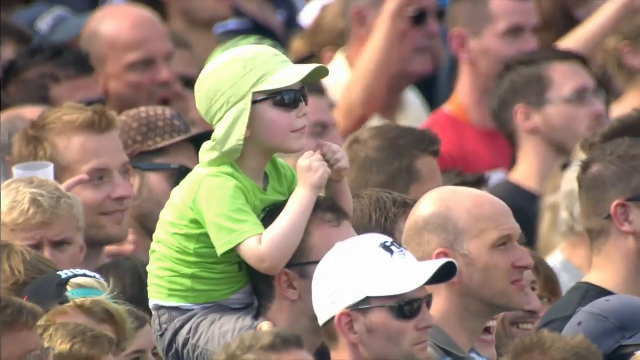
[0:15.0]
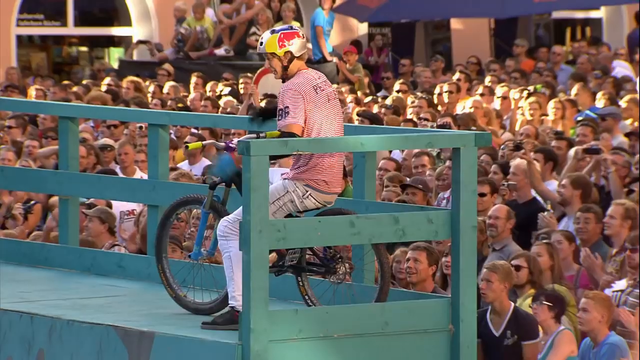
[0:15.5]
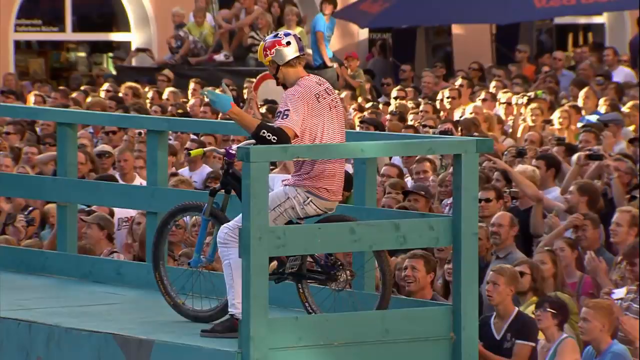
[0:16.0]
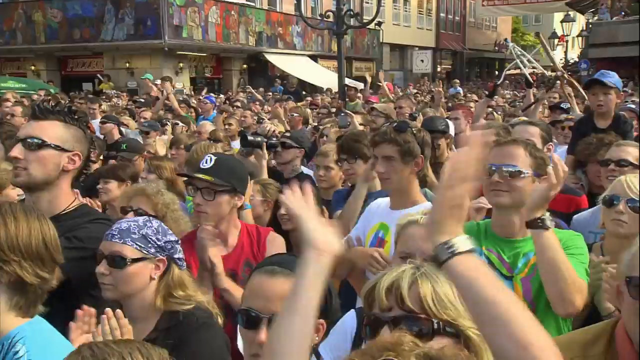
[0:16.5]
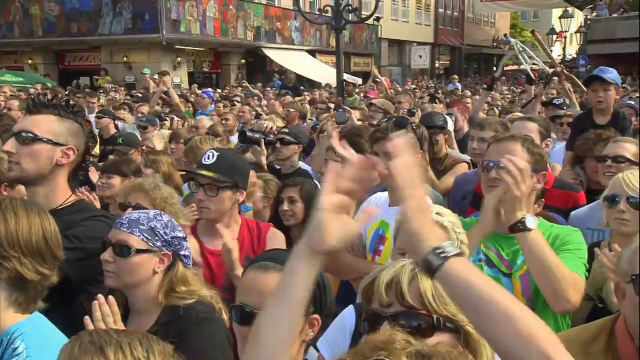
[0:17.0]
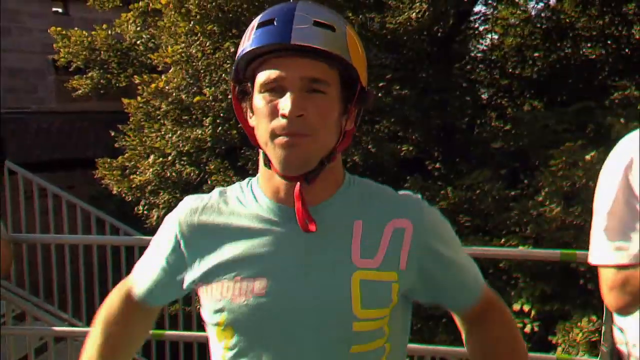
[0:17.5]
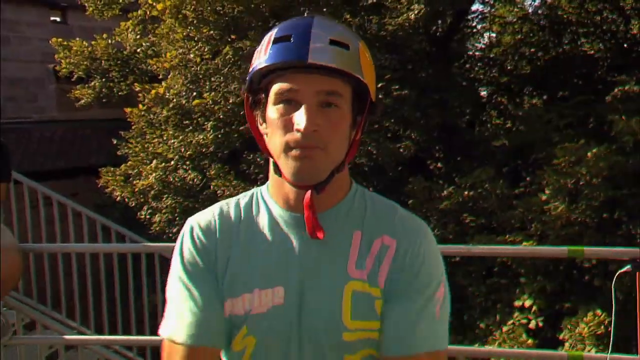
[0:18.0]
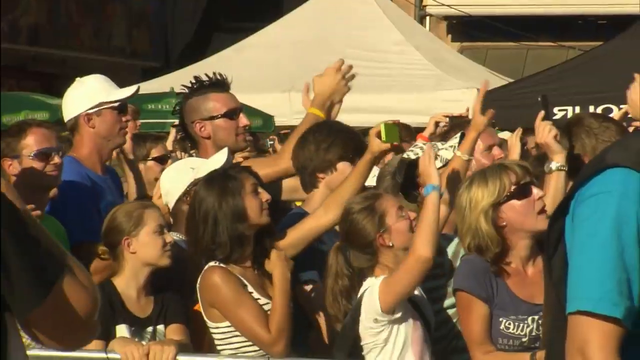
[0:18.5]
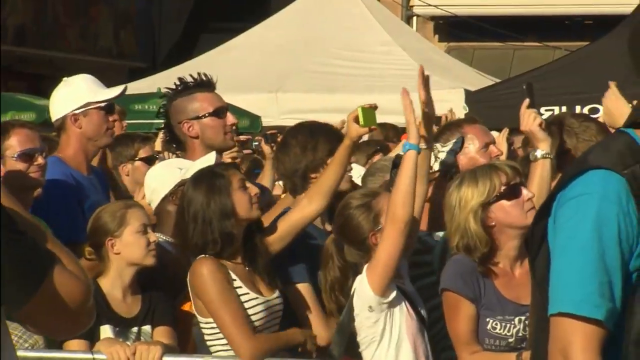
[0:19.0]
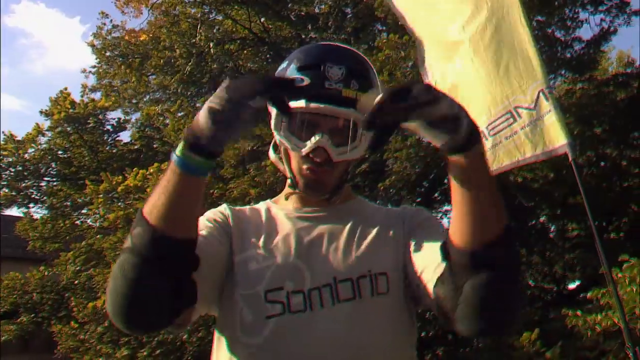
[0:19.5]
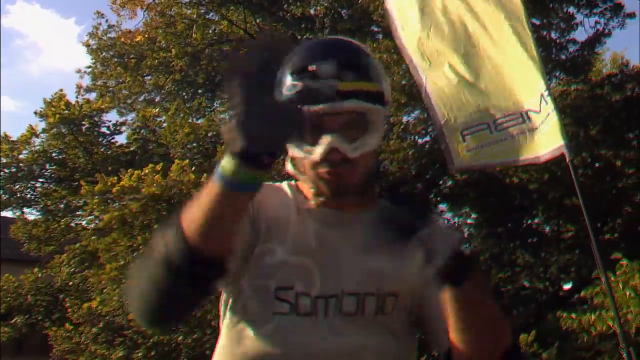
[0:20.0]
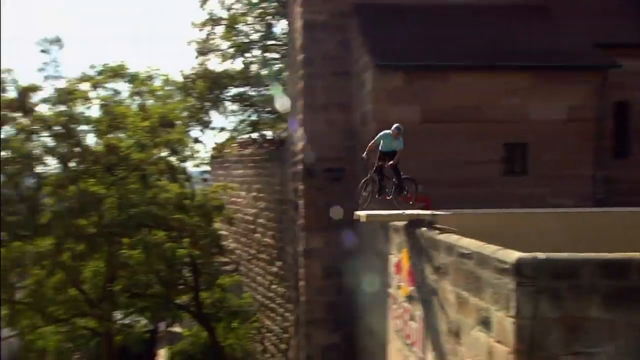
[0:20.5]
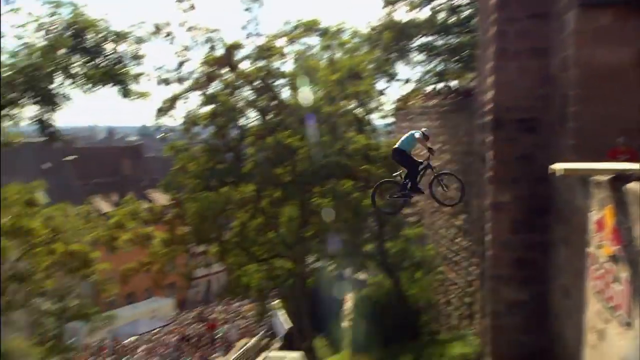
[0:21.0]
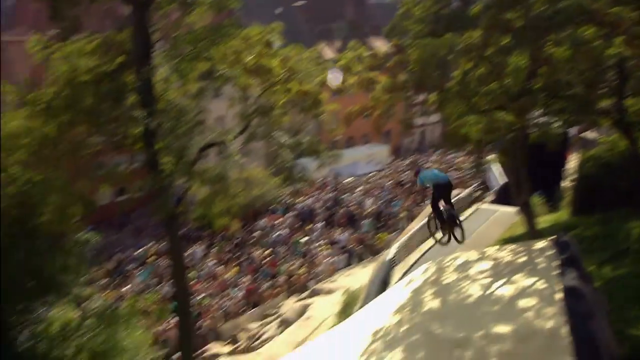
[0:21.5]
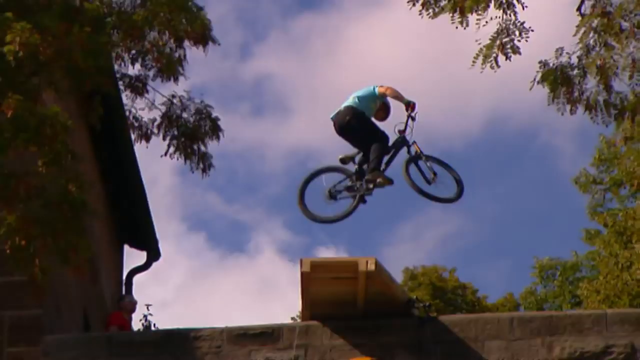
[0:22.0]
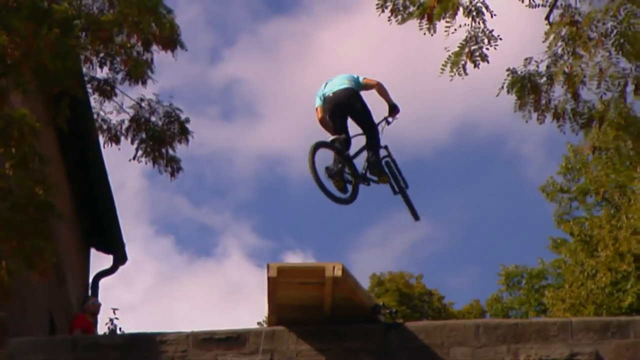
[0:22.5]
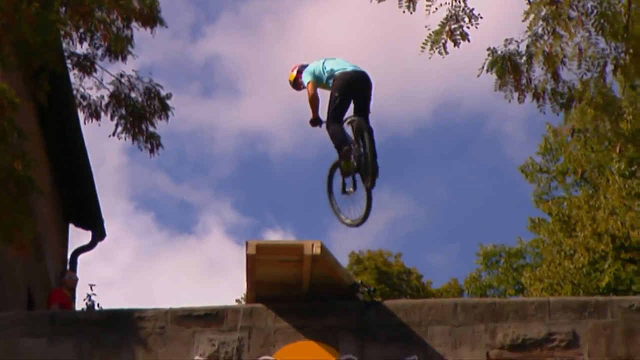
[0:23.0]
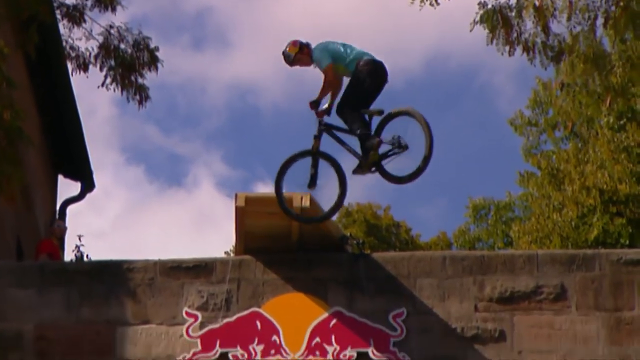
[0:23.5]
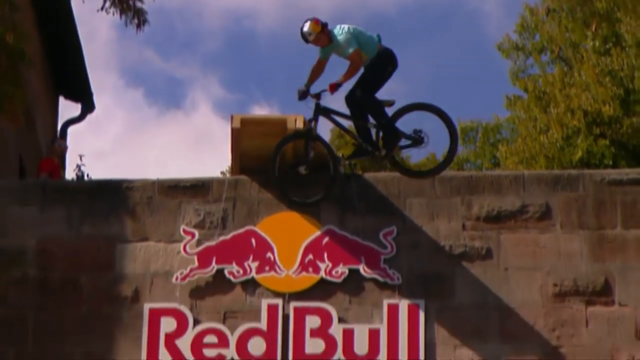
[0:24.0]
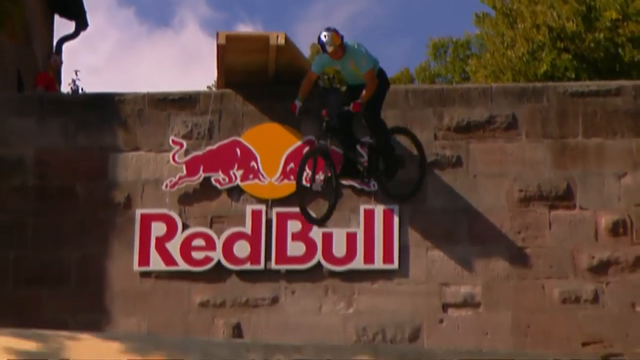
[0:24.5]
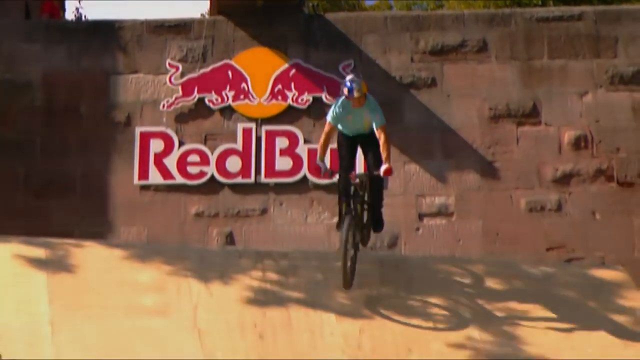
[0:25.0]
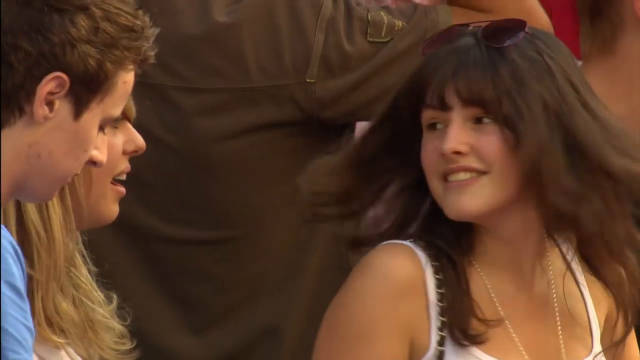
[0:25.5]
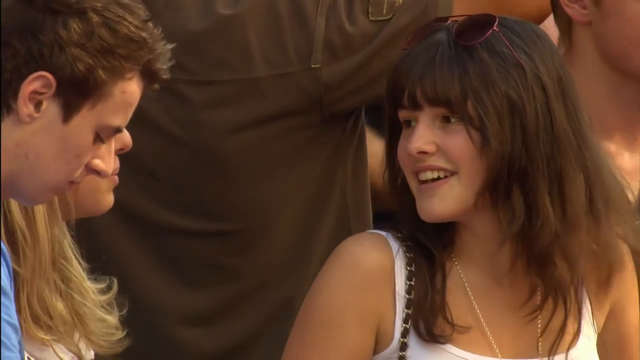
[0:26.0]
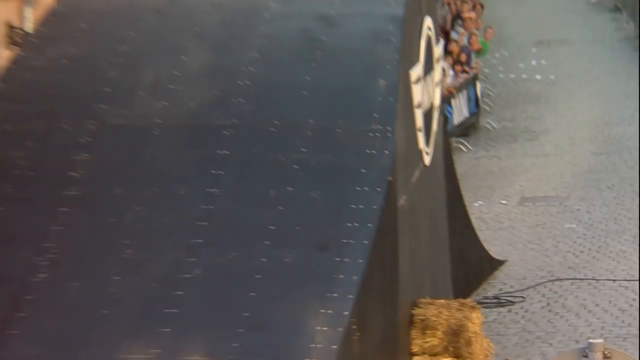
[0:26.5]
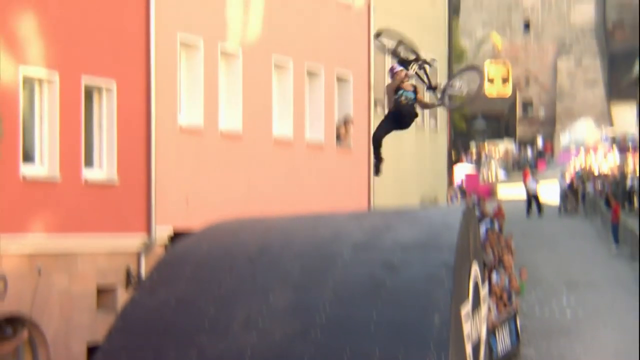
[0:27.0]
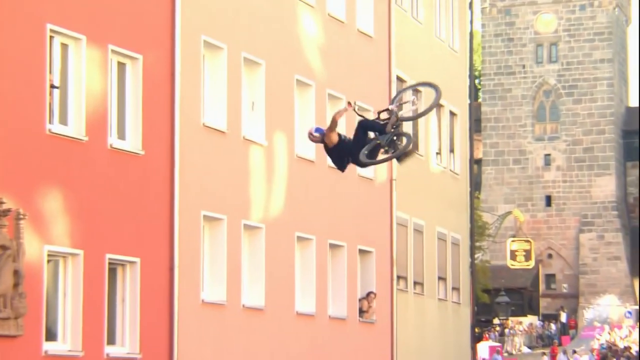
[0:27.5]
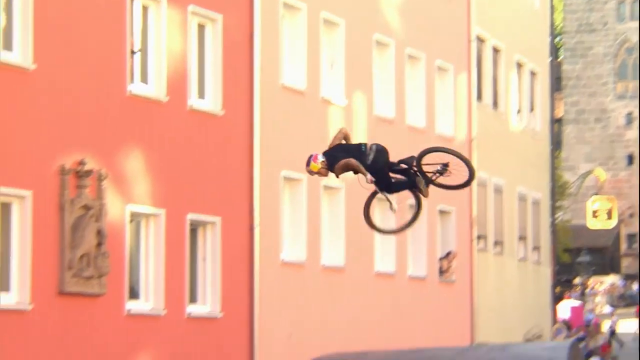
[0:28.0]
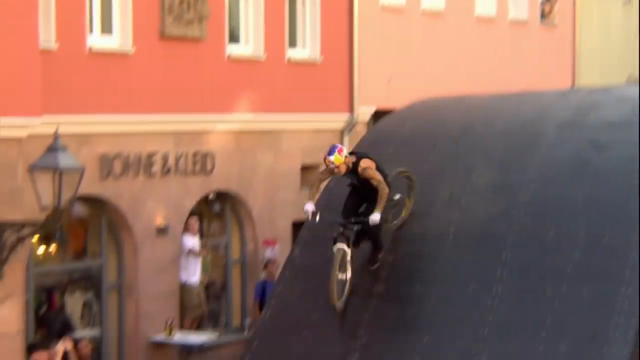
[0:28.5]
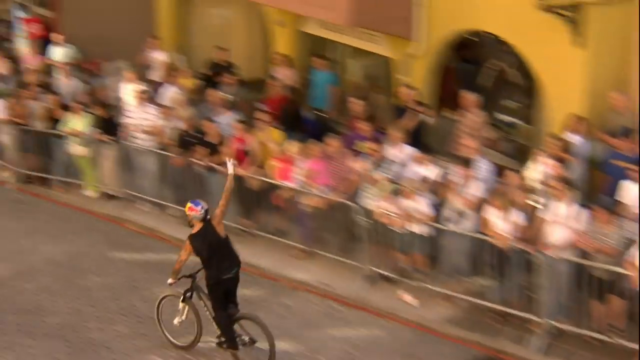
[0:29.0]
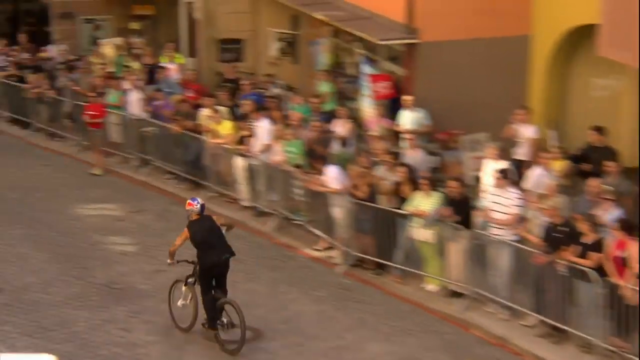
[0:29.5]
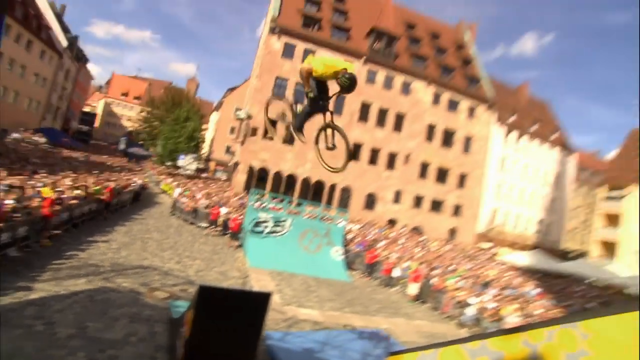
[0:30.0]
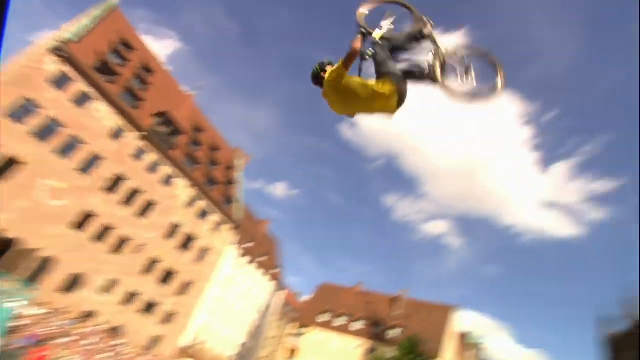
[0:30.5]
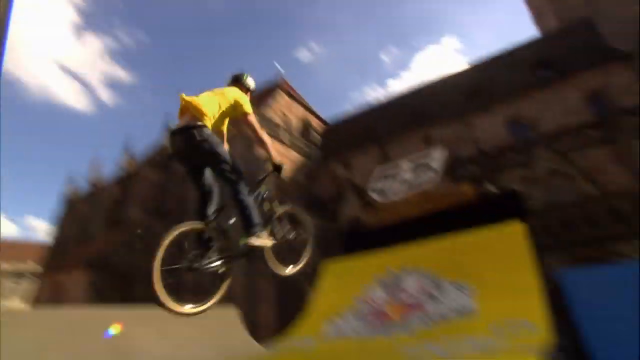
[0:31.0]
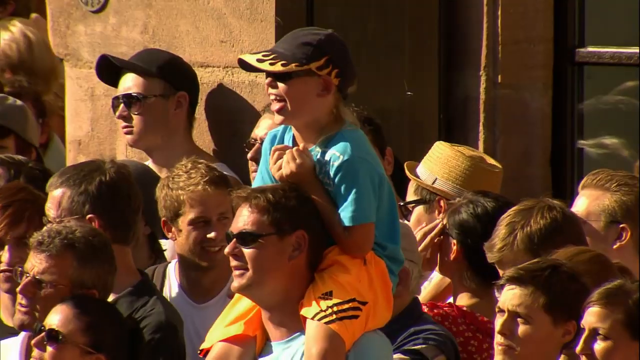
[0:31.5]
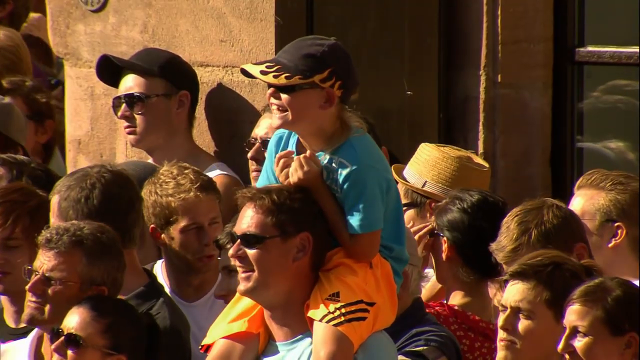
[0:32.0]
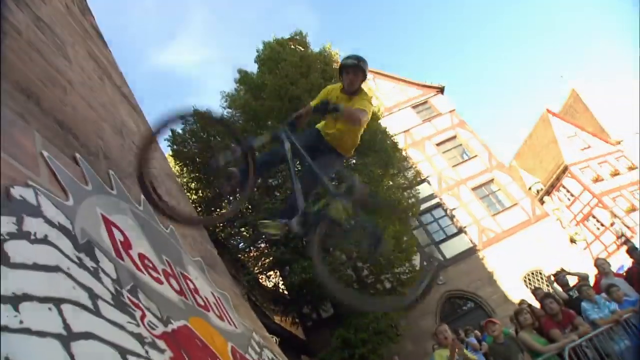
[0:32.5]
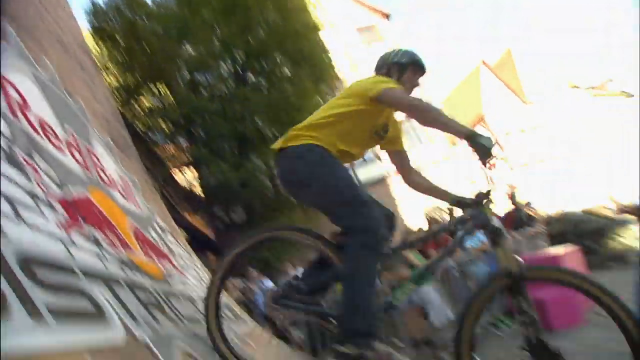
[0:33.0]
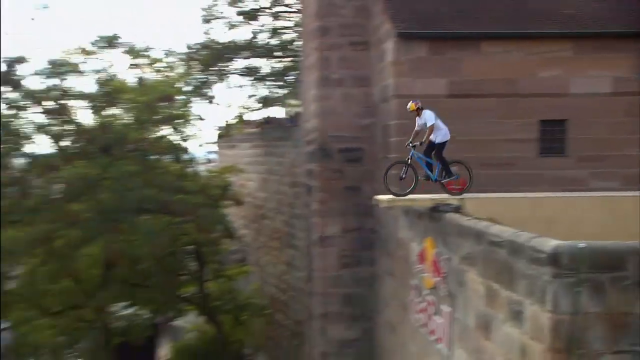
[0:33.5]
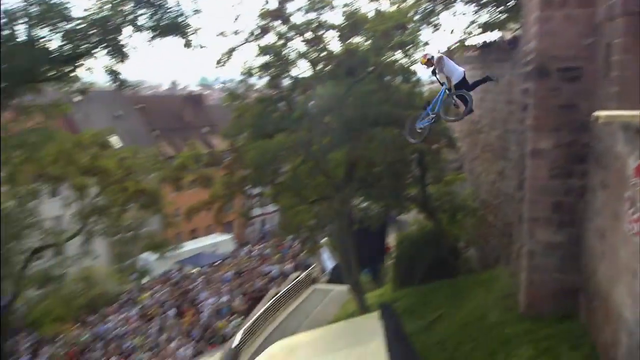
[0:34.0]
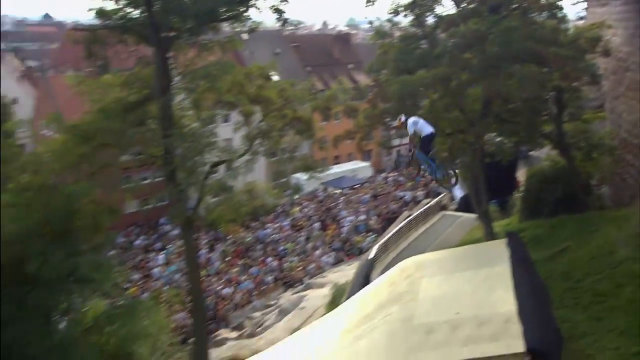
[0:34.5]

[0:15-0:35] At an outdoor event put on by Red Bull, extreme bicyclists flip, go down ramps and jump off the tops of buildings while the crowd cheers. The bicyclists all wear helmets as they spin through the air and go down the other side of the ramp, doing twists and turns and at times putting one hand up in the air to wave at the crowd. Some make full flips and land safely. The crowd is packed together with huge numbers of people, including children, adults and teenagers, many wearing sunglasses or hats on the very sunny day. The ramp and platform are made of wood, put together. The Red Bull name is advertised in the background, so the sponsor is probably Red Bull.